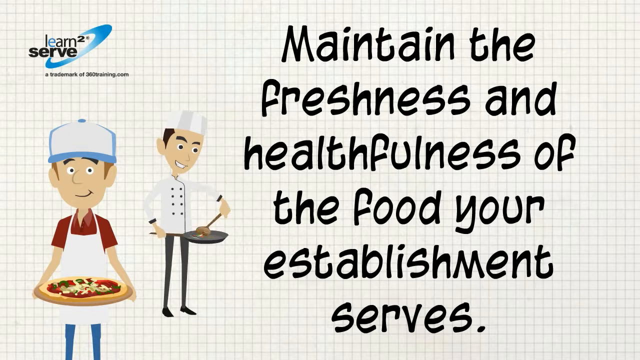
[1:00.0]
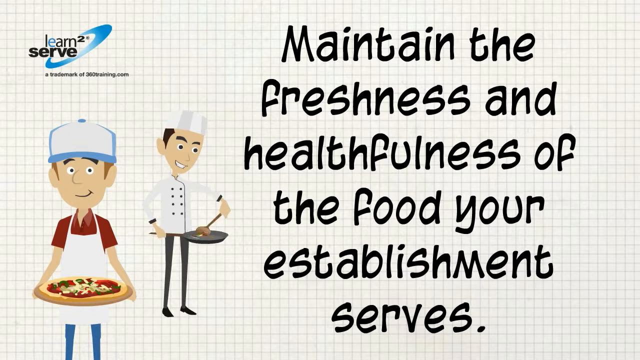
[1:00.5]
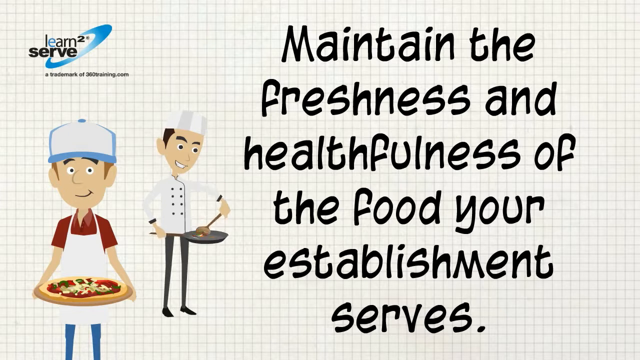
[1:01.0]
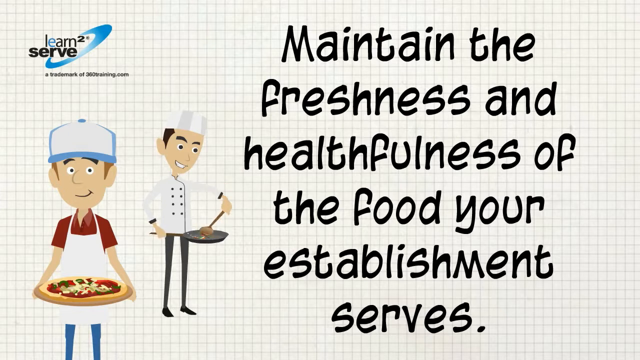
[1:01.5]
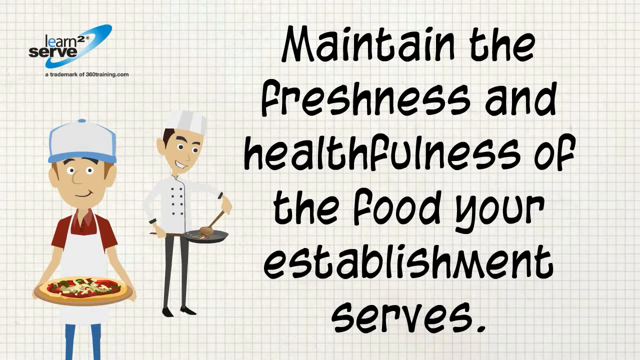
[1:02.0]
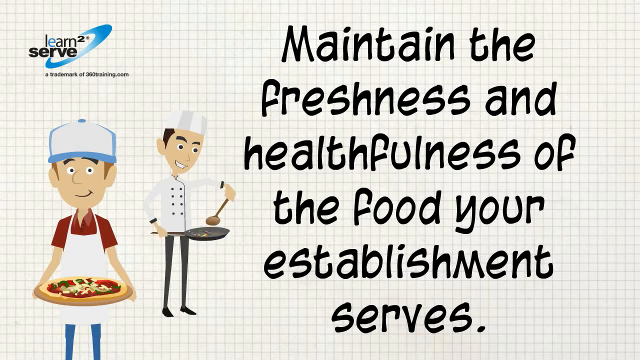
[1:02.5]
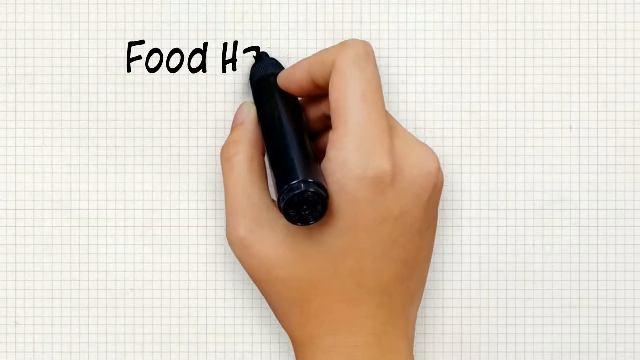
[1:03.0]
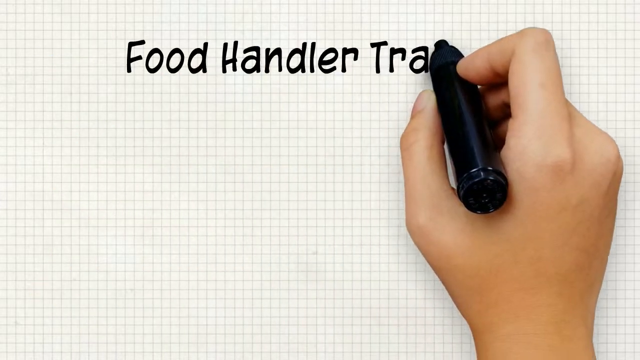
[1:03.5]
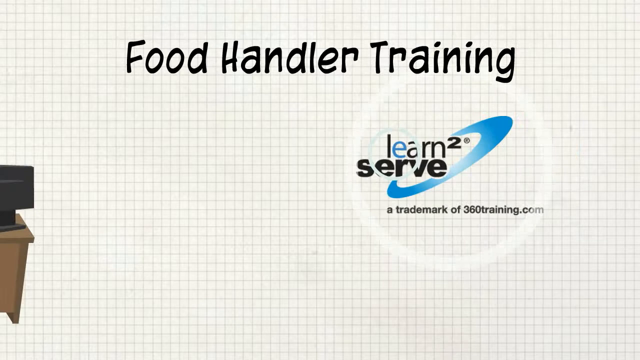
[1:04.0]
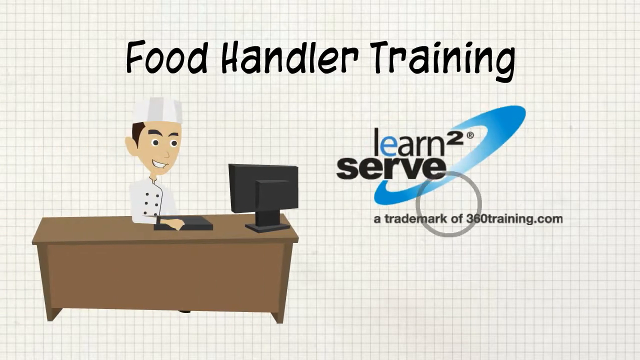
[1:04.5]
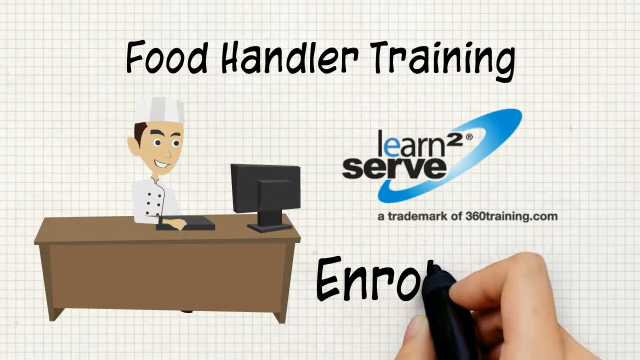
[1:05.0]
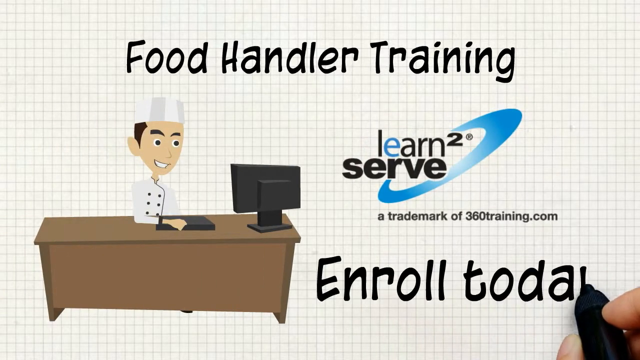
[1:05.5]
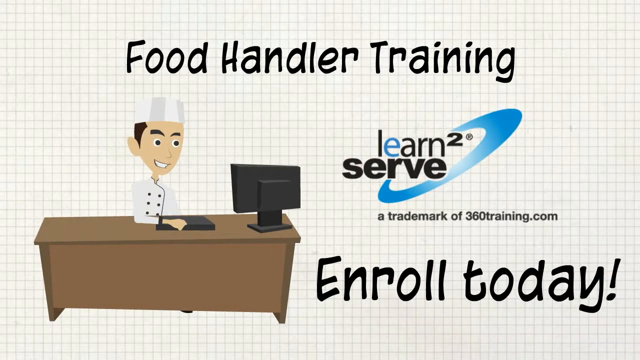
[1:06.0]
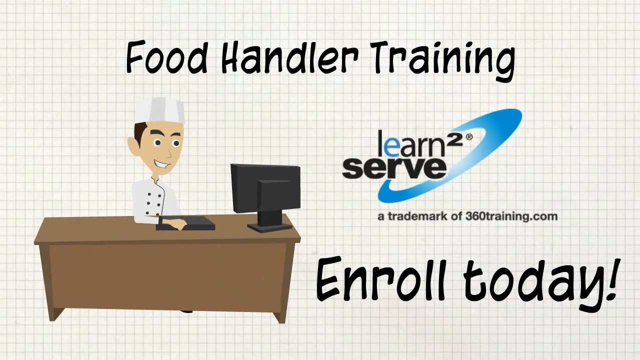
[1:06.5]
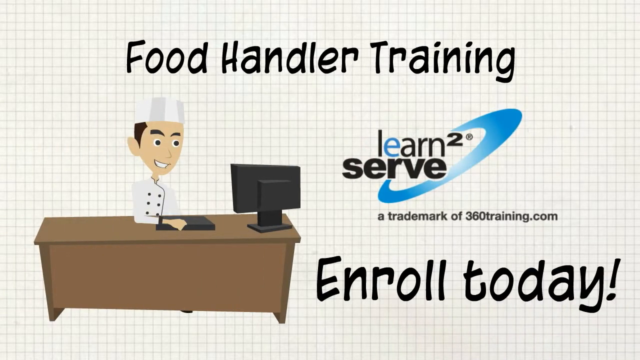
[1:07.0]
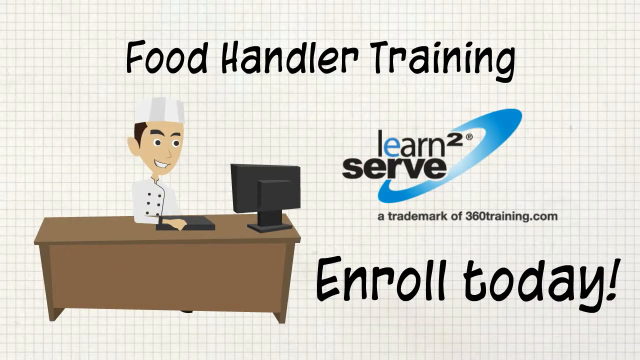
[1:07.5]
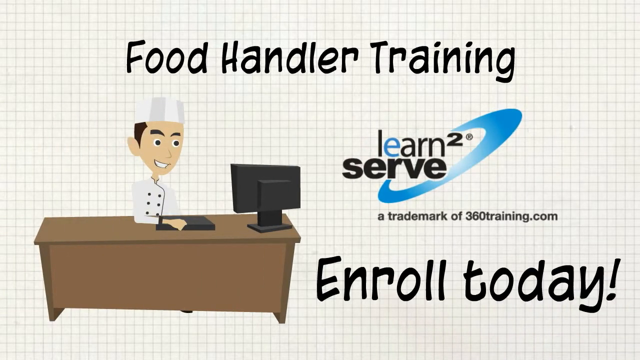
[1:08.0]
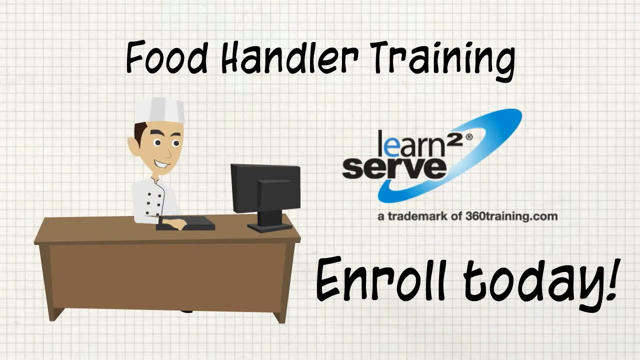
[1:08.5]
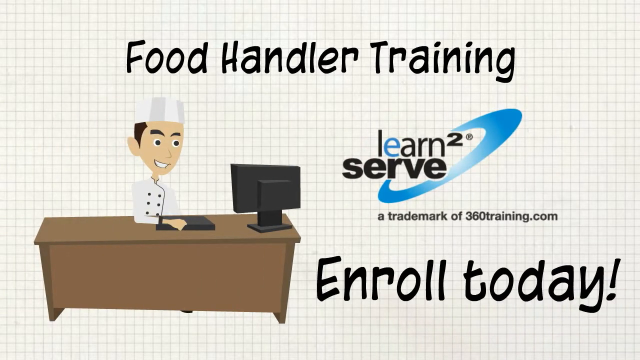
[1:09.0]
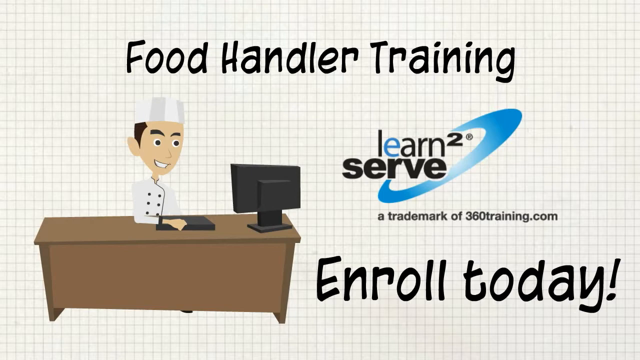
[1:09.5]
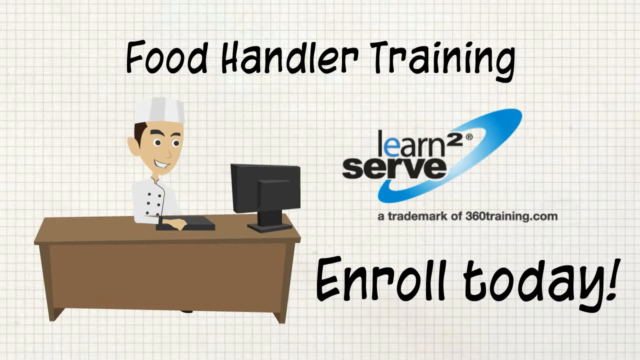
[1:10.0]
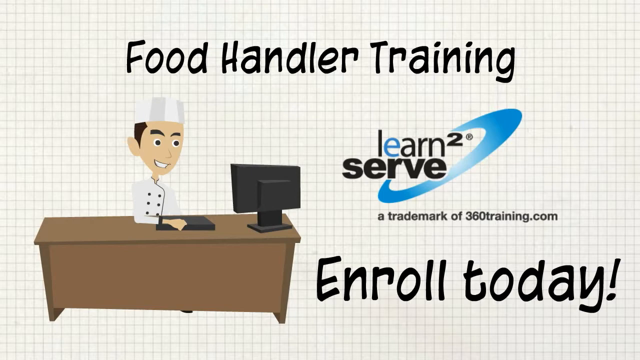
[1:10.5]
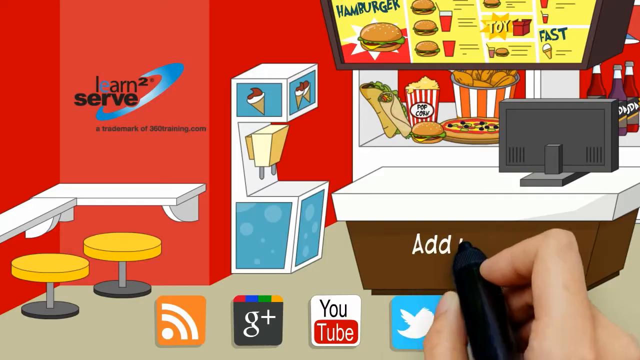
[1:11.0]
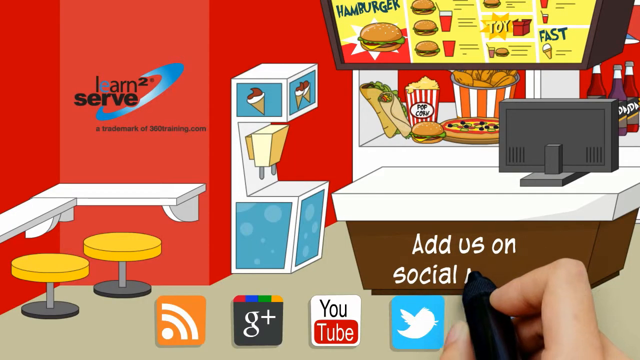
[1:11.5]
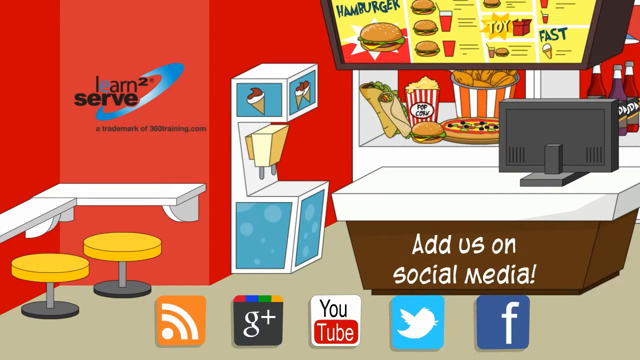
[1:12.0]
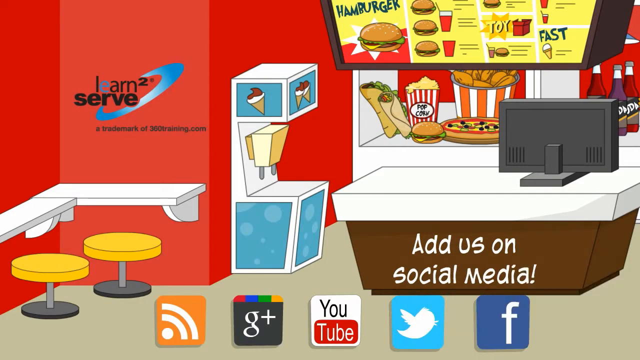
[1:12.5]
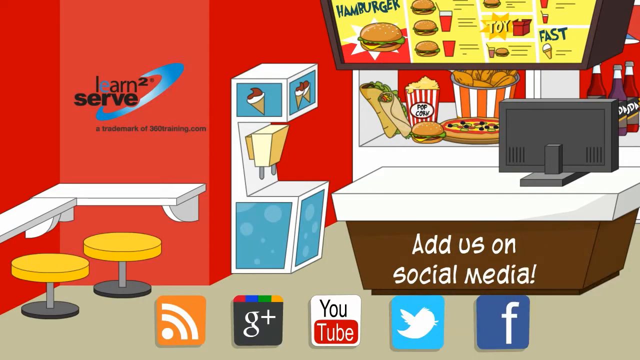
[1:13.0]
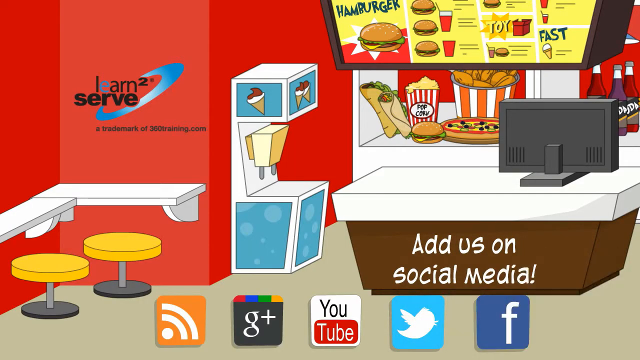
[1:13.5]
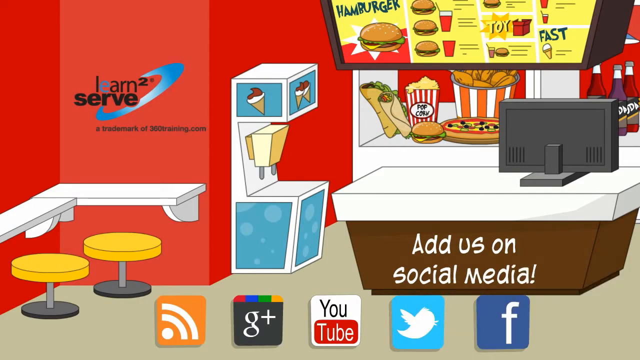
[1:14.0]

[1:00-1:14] After the section on freshness, a training promotion appears. A child sits at a desk in front of a desktop, wearing a white uniform and pressing on the keyboard. A website is written on screen, followed by an invitation to enroll today to learn about handling food. Social media handles are then given so viewers can follow them on social media.